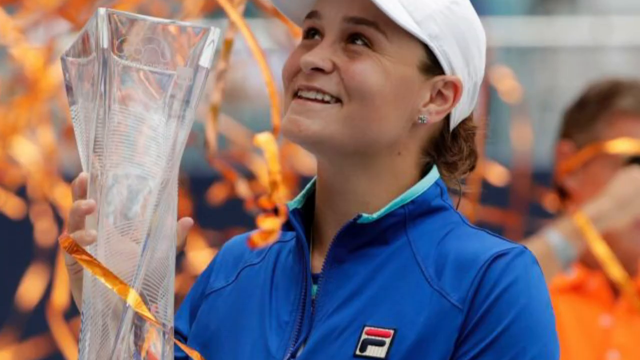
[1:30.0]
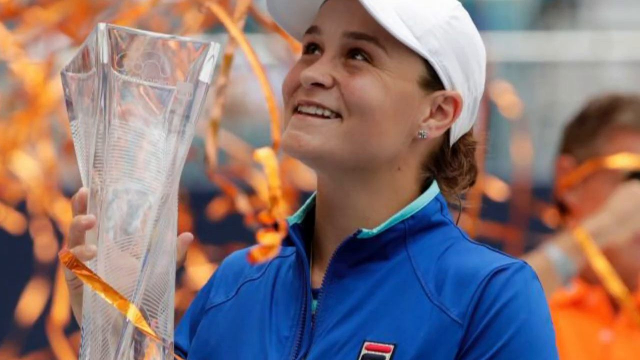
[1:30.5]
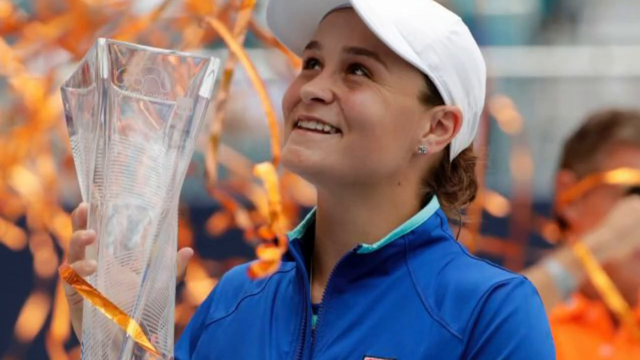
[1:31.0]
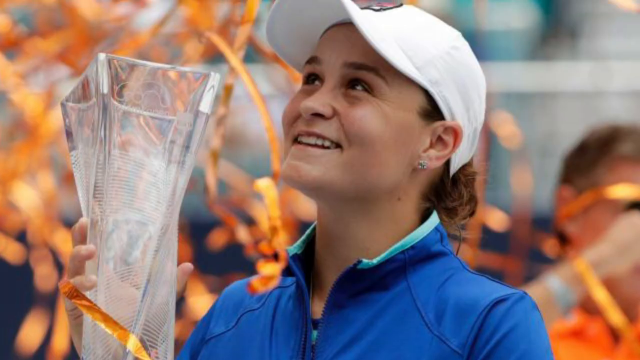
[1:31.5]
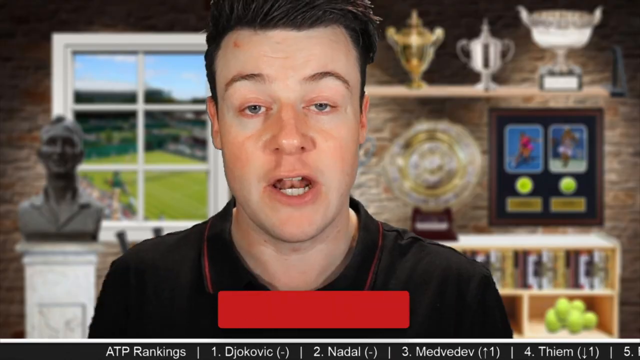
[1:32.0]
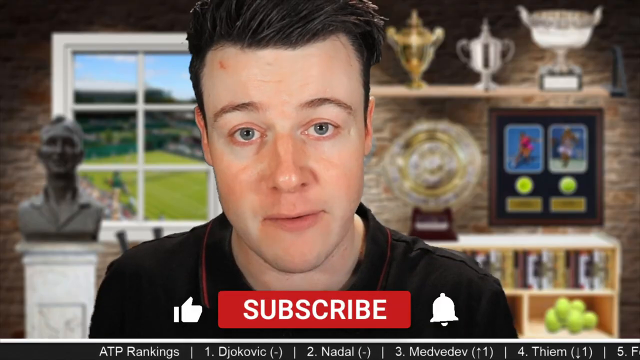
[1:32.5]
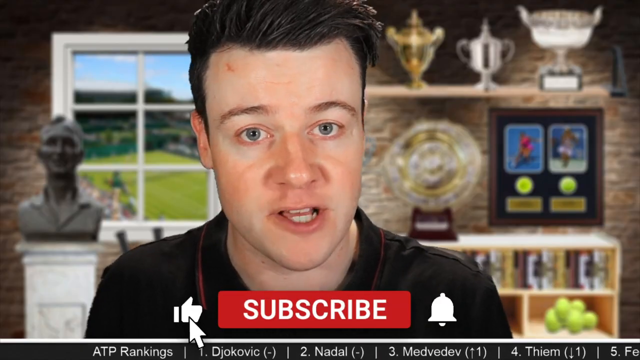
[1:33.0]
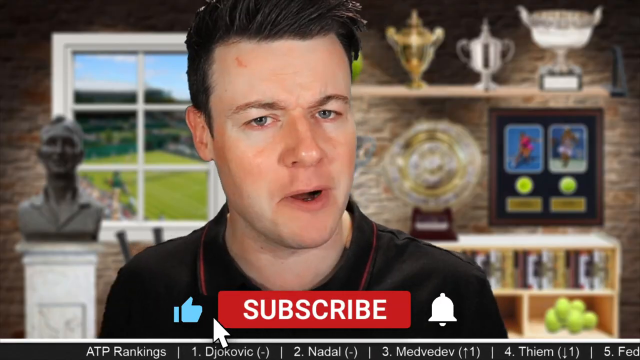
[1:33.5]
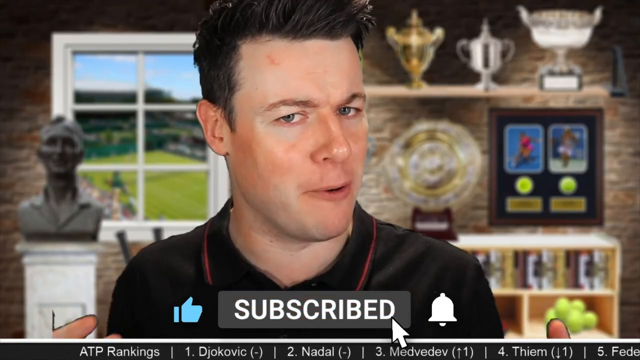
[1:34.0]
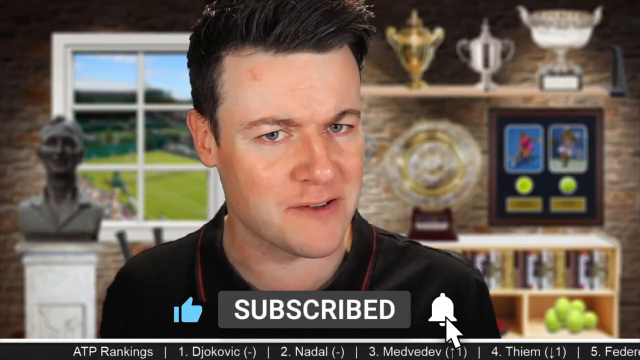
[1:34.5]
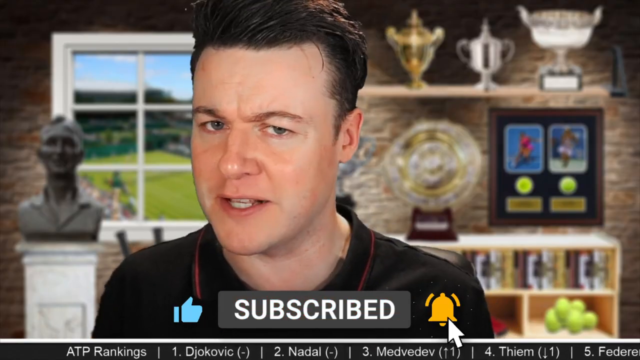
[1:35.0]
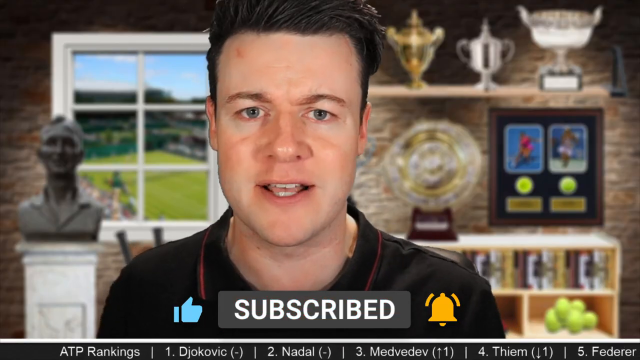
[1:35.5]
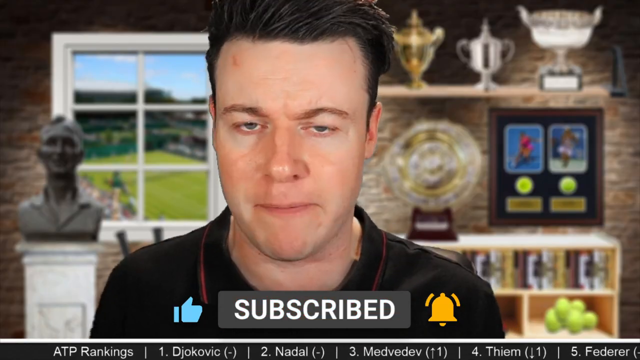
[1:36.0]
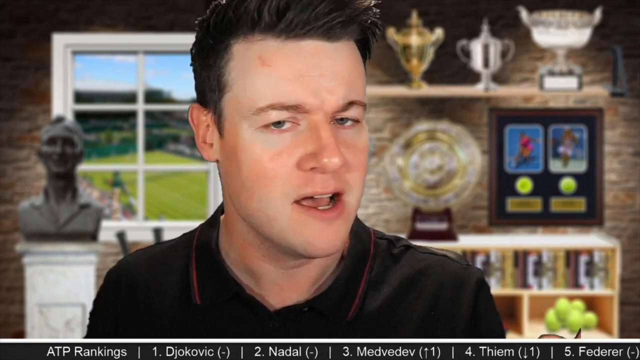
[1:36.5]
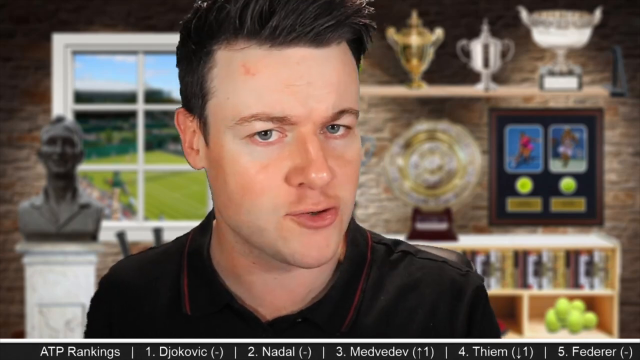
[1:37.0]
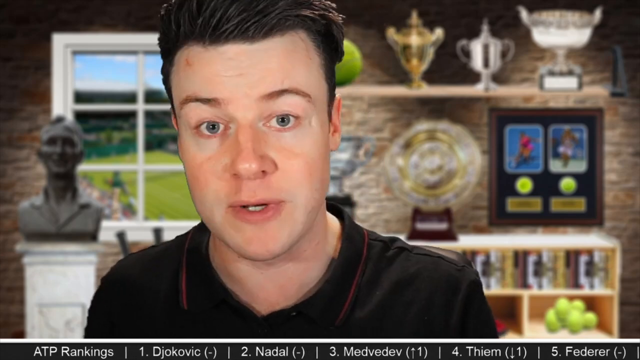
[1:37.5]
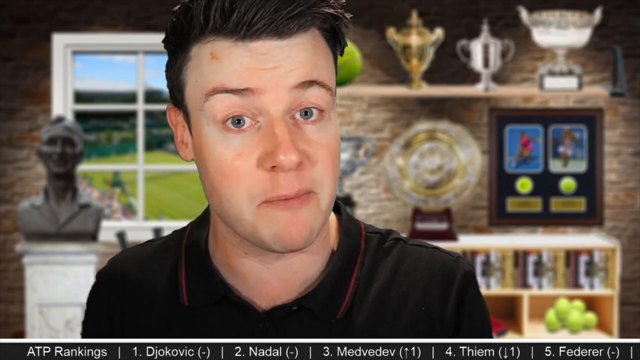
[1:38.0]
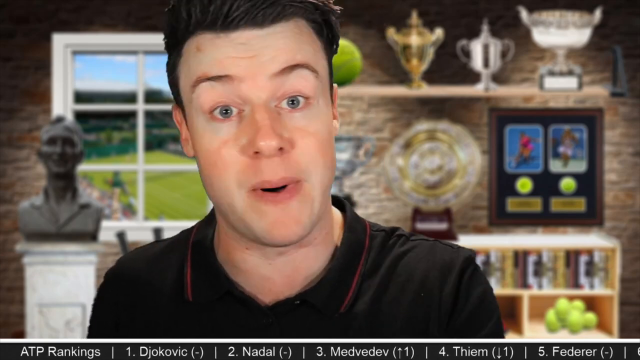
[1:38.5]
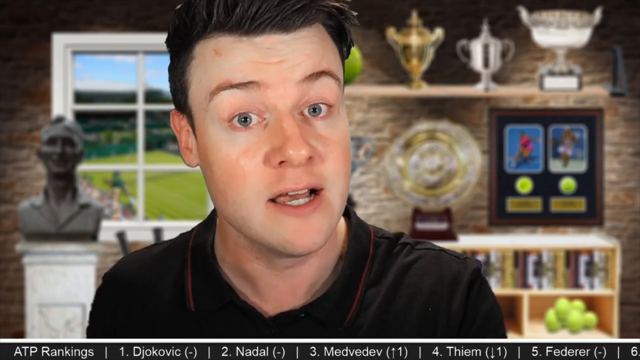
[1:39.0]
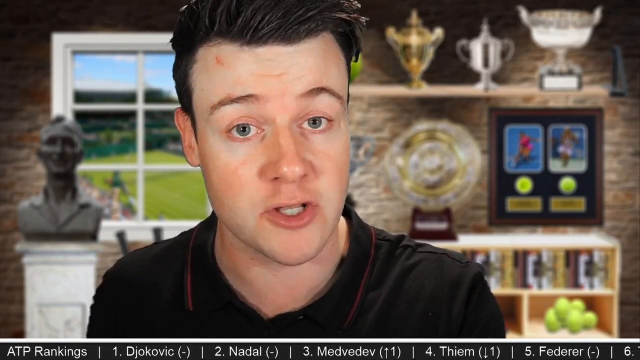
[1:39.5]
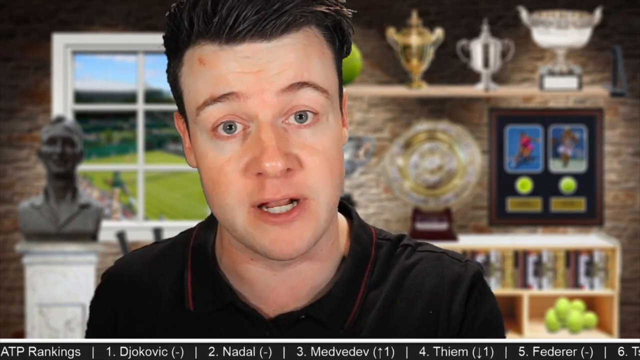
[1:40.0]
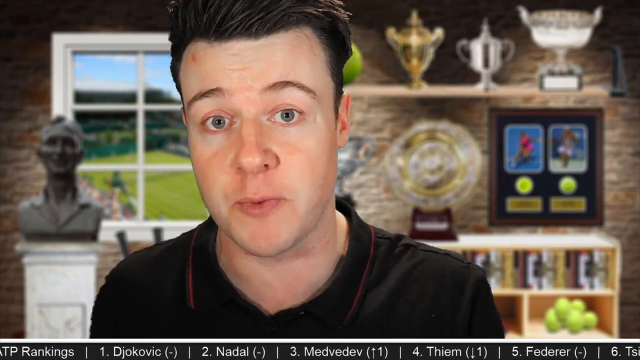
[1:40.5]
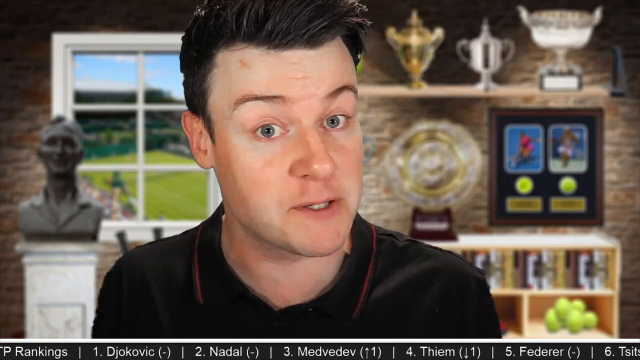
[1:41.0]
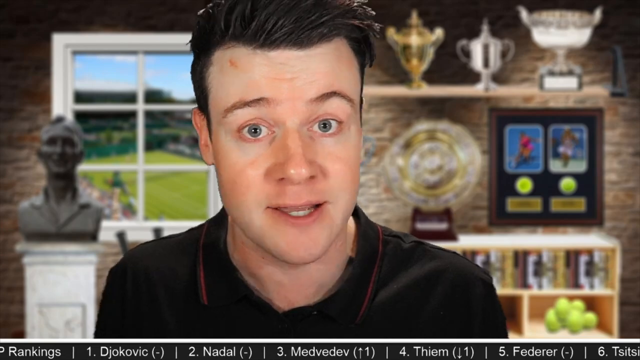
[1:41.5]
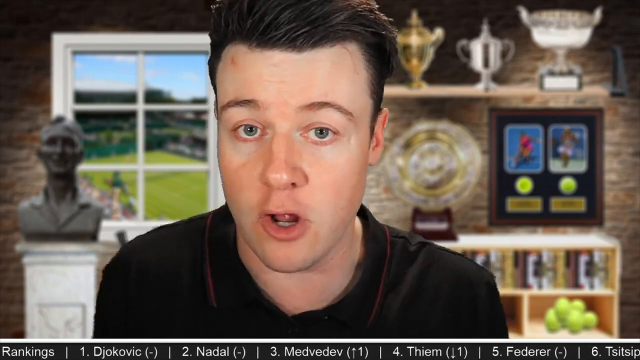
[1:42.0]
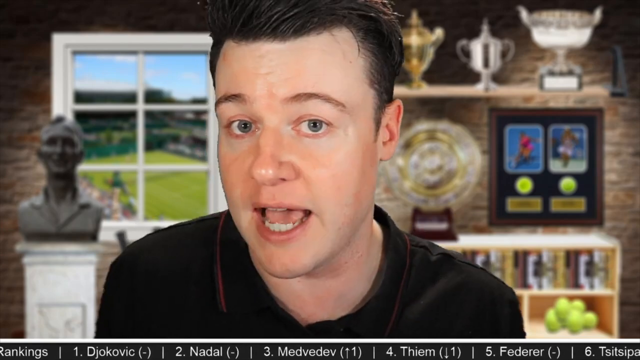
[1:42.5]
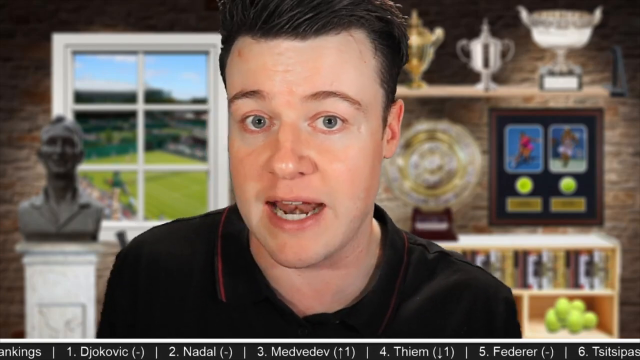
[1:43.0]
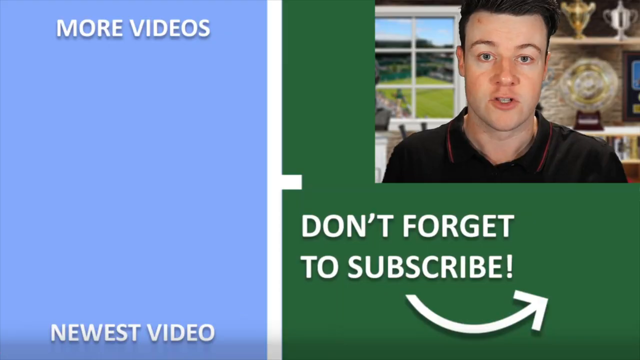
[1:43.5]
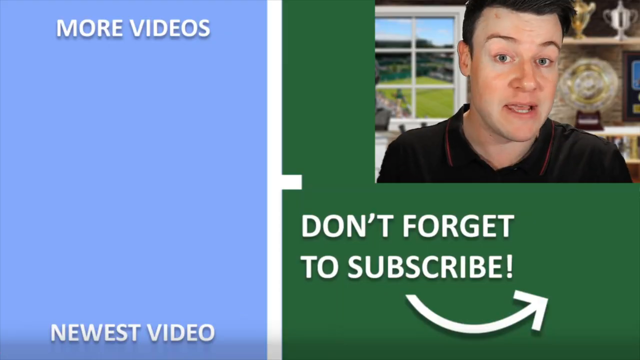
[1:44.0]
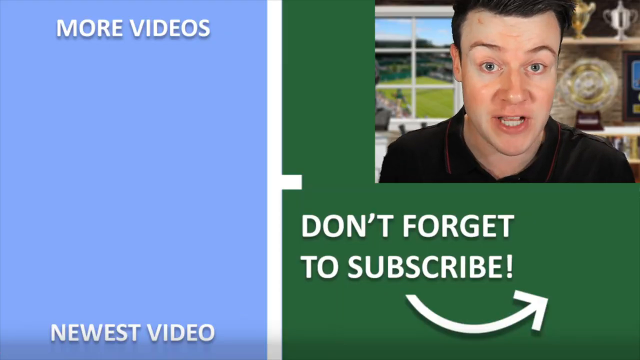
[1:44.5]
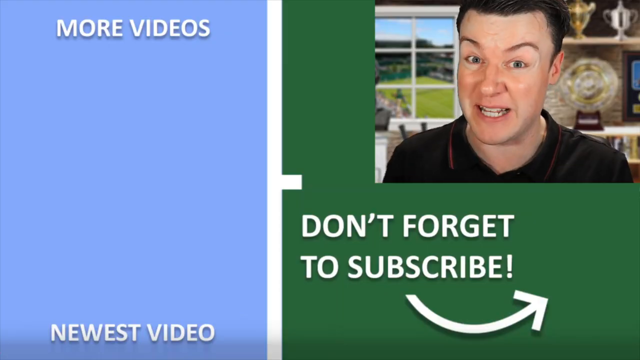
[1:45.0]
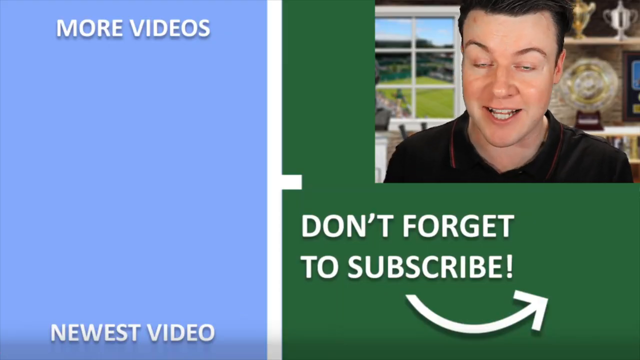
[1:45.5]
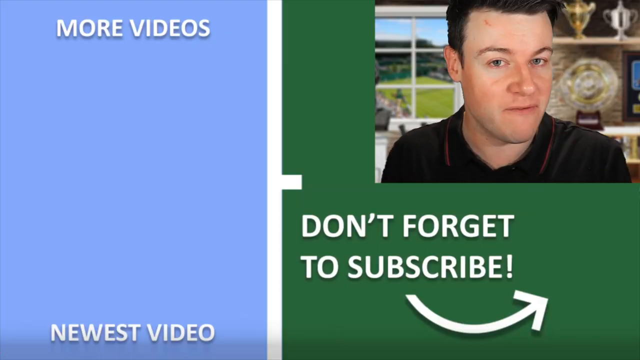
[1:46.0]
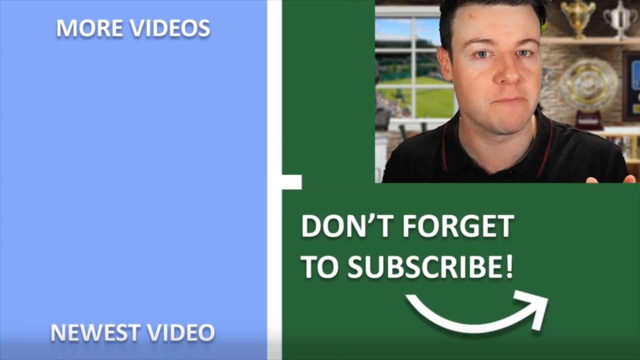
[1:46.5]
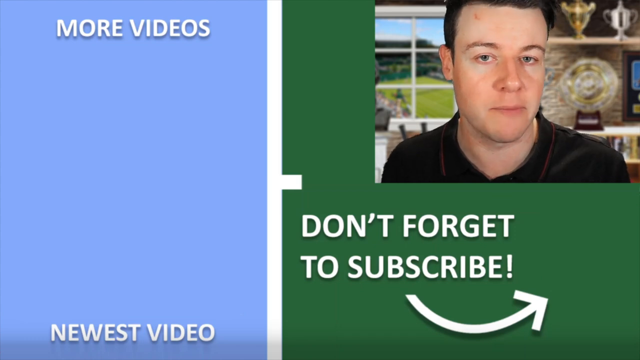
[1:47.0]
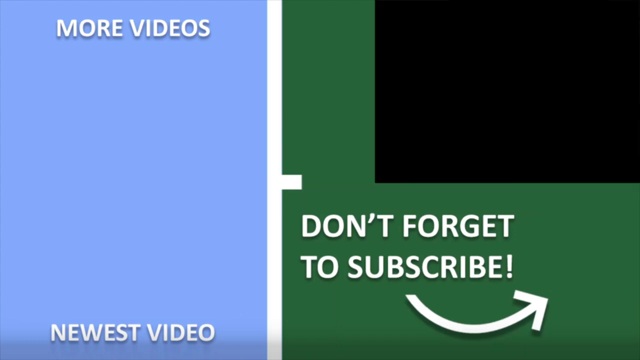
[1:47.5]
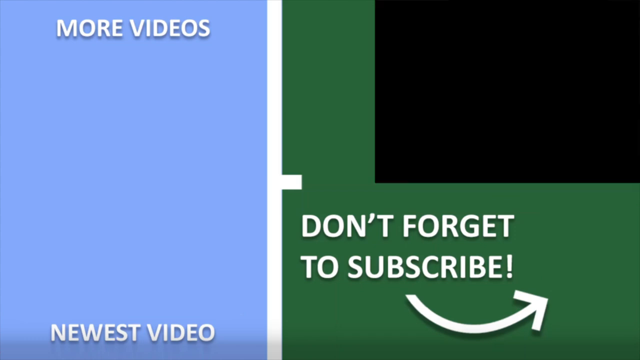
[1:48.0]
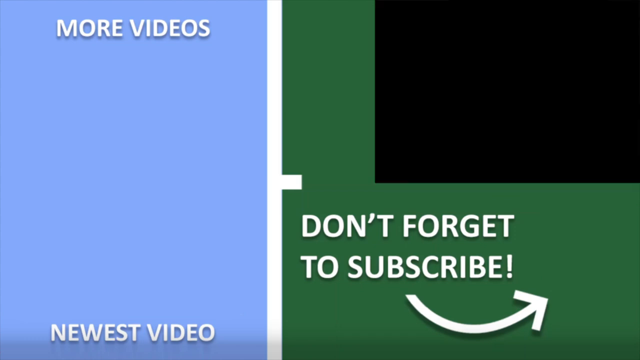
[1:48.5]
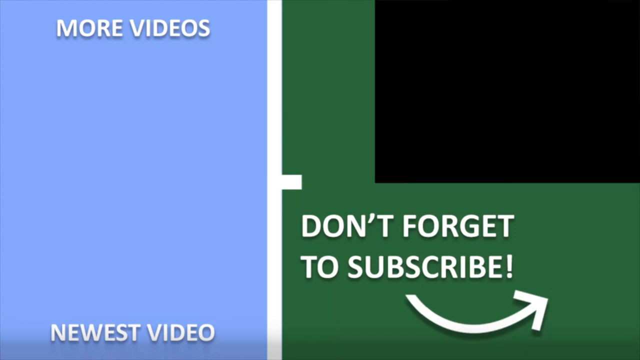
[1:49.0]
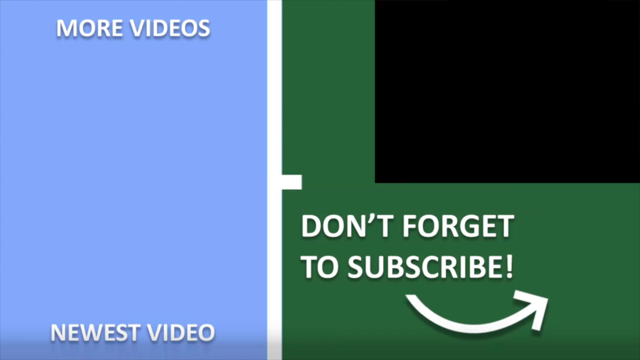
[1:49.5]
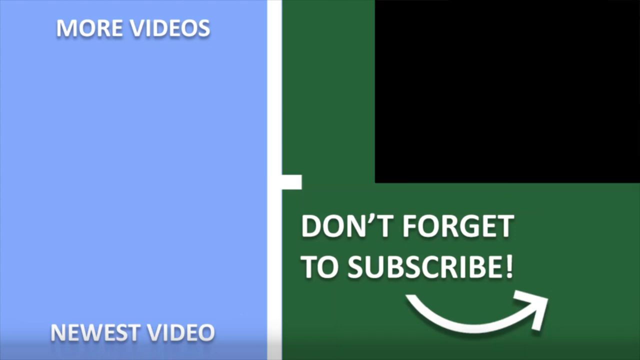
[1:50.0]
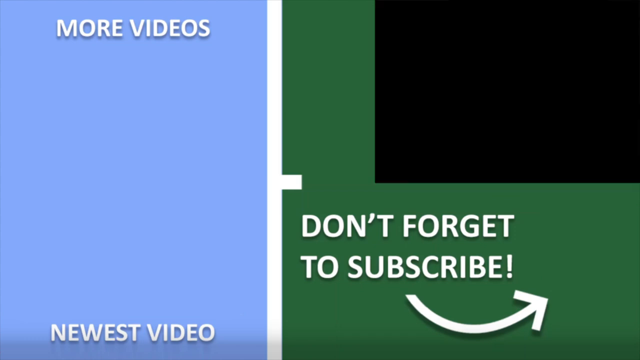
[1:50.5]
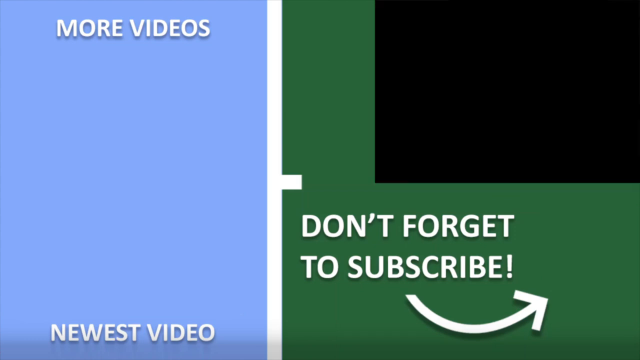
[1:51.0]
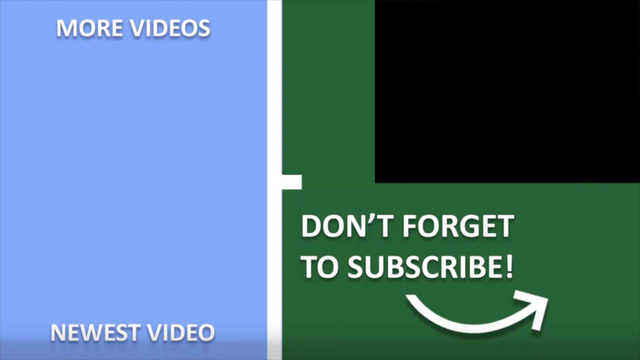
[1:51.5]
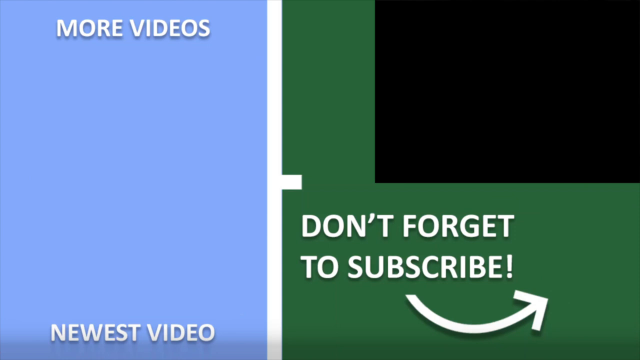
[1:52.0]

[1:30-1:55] A photo of Ash Barty celebrating a championship win is on screen. She holds a trophy made of glass that looks like a vase, looks to the left of the screen, and wears a blue jacket and a white baseball hat, with orange streamers behind her. The video goes back to the podcast host, who has fair skin, blue eyes and brown hair combed to the right, and wears a black polo top with sort of a red line around the collar. Behind him is a fake background of tennis trophies on shelves and a window looking out on a tennis game on a grass court. At the bottom of the screen a subscribe prompt appears and a mouse pointer clicks the like and subscribe buttons. The host is quite animated, though his hands are not really visible; he shrugs a bit and raises his eyebrows a bit. The screen then changes to a split screen. On the left, against a blue background, it says "more videos" with suggested content, and "newest video" appears in white text in the bottom left. The right half has sort of a green background, with a video of the host in the top right and white text below it reading "don't forget to subscribe".